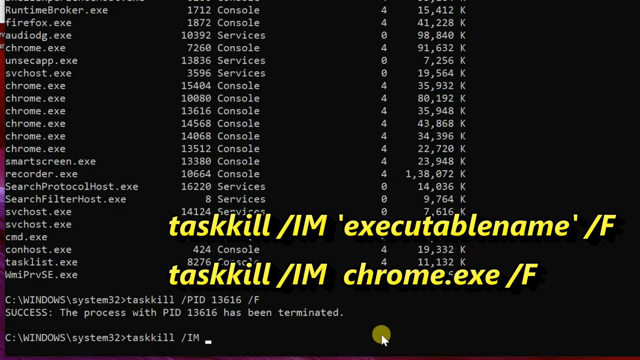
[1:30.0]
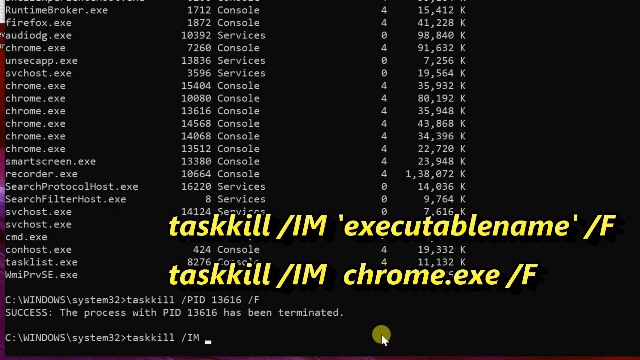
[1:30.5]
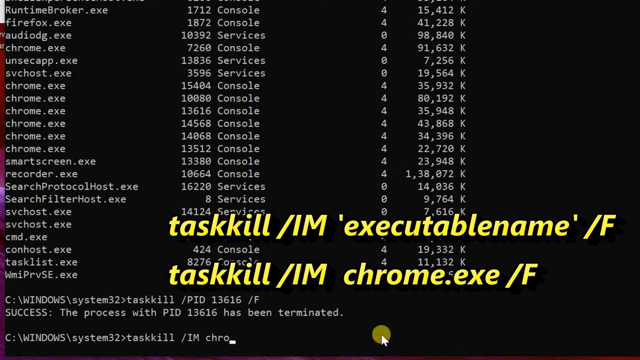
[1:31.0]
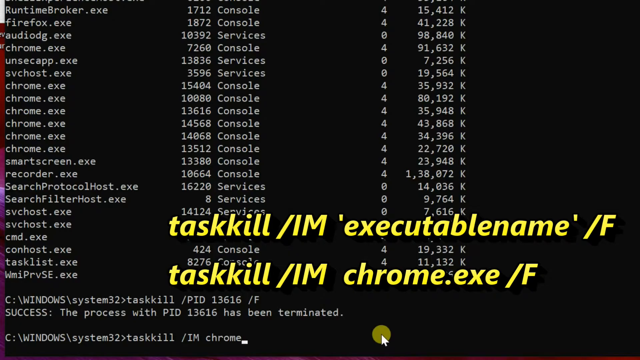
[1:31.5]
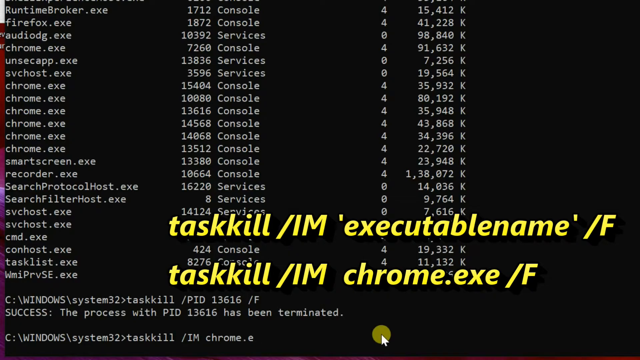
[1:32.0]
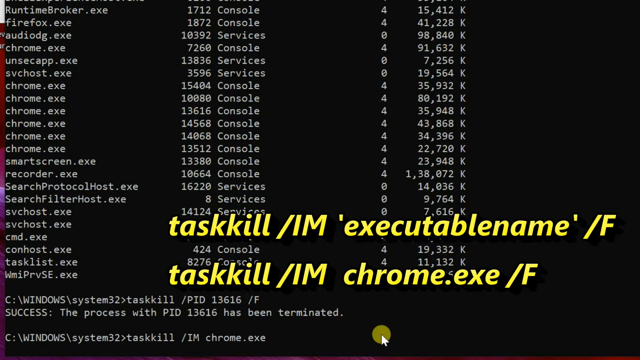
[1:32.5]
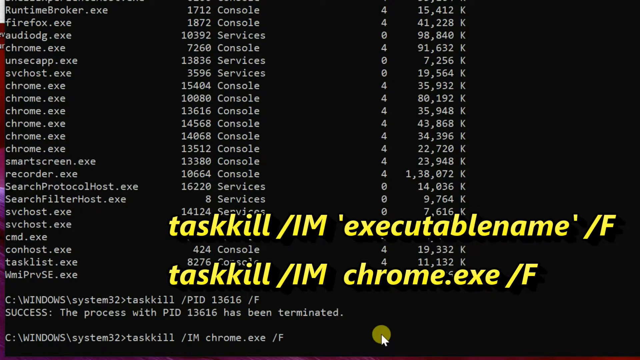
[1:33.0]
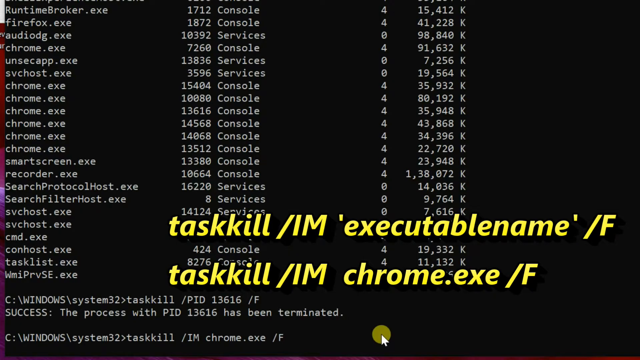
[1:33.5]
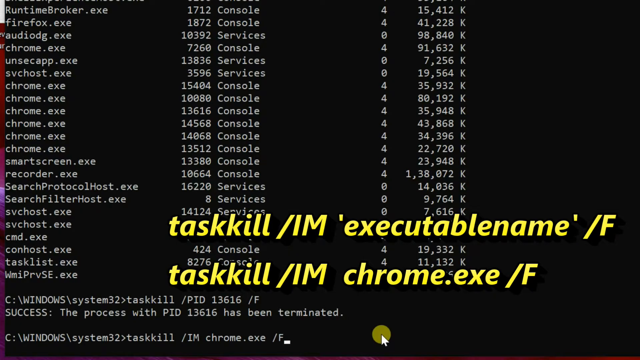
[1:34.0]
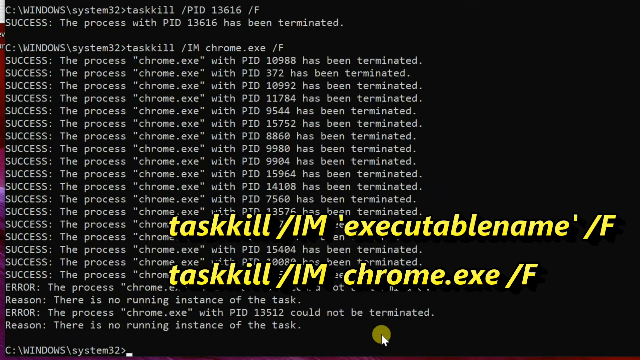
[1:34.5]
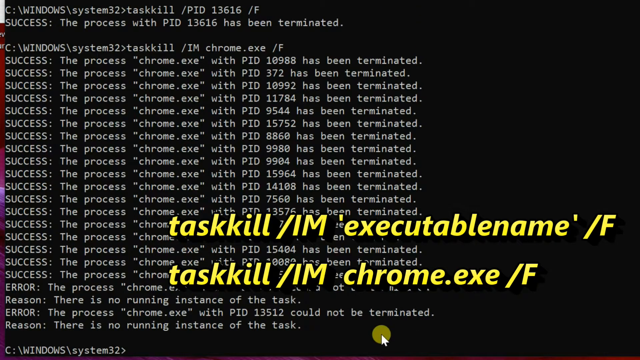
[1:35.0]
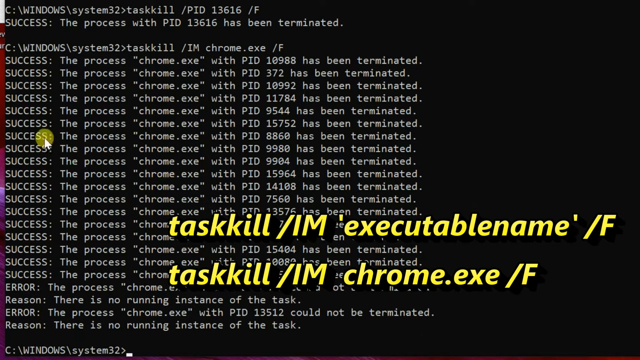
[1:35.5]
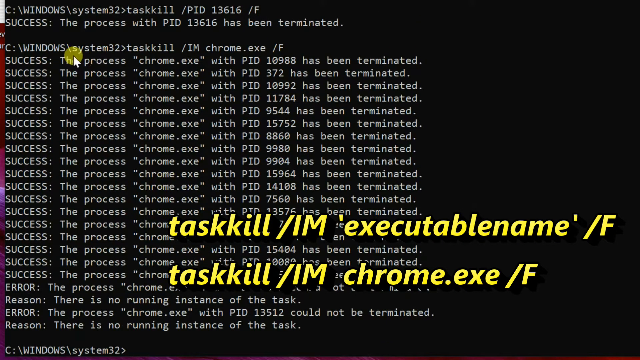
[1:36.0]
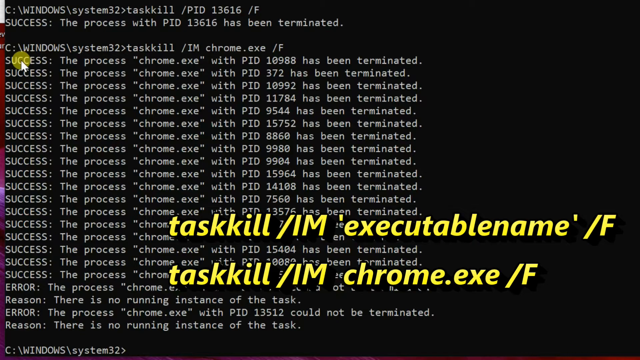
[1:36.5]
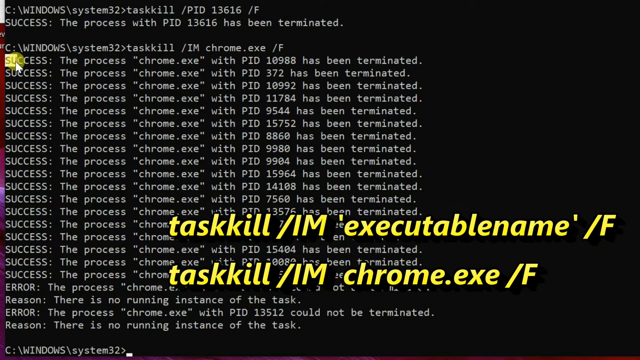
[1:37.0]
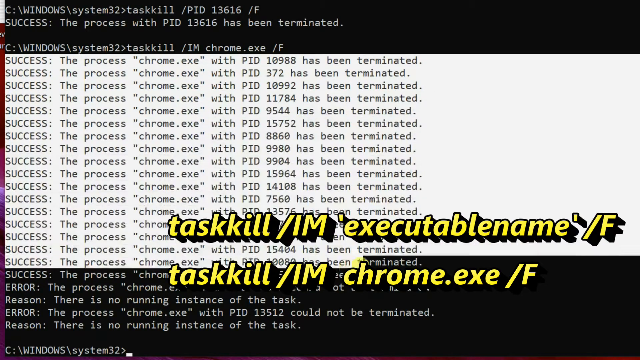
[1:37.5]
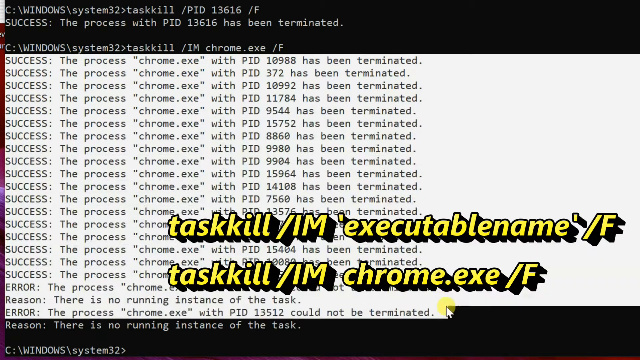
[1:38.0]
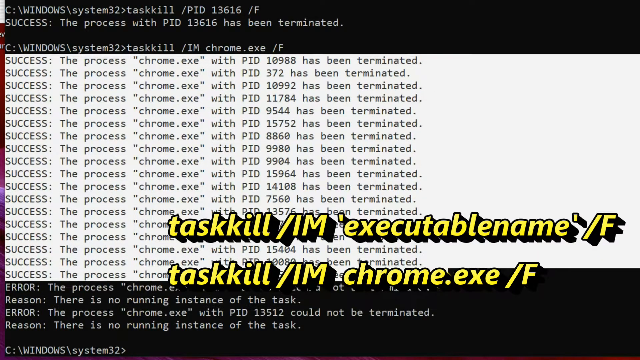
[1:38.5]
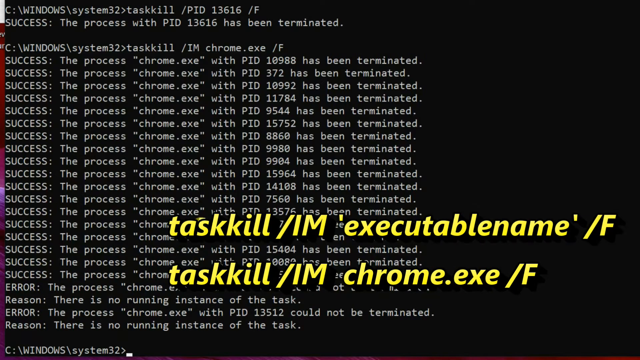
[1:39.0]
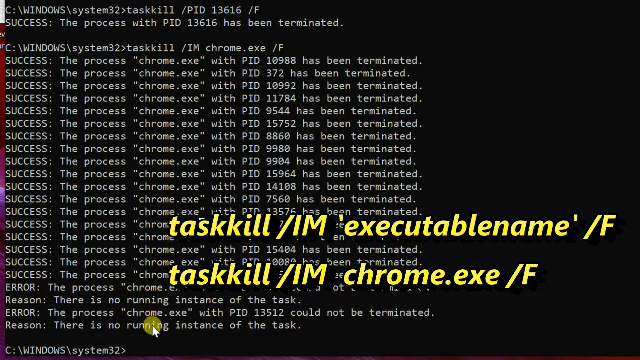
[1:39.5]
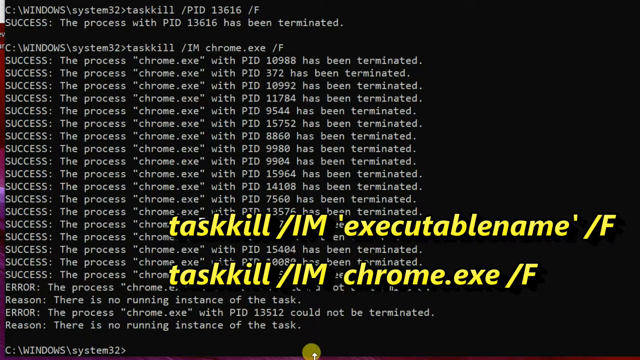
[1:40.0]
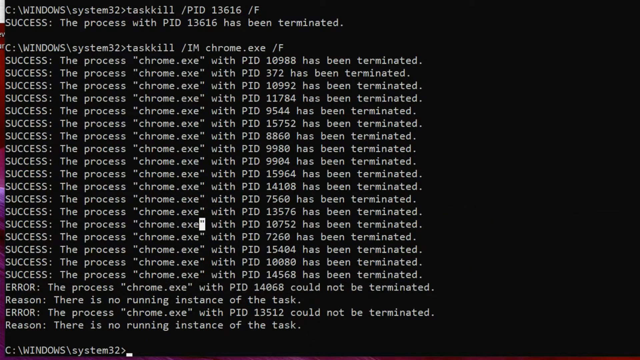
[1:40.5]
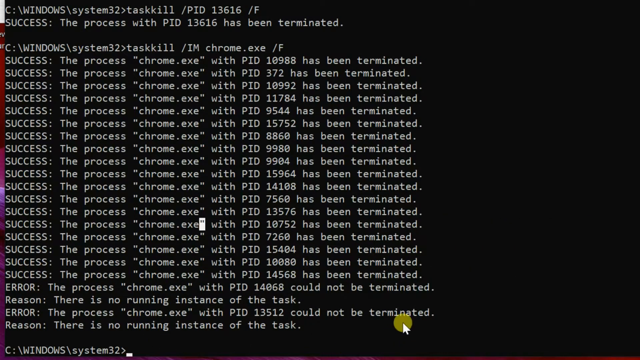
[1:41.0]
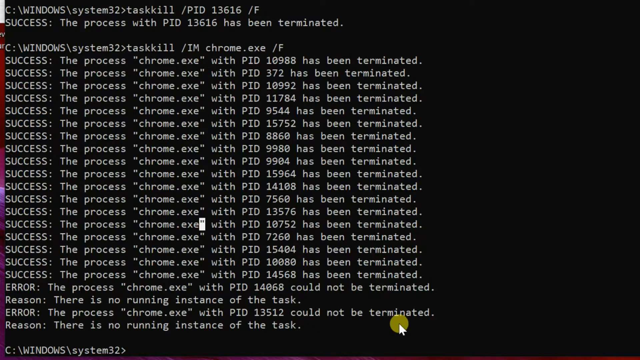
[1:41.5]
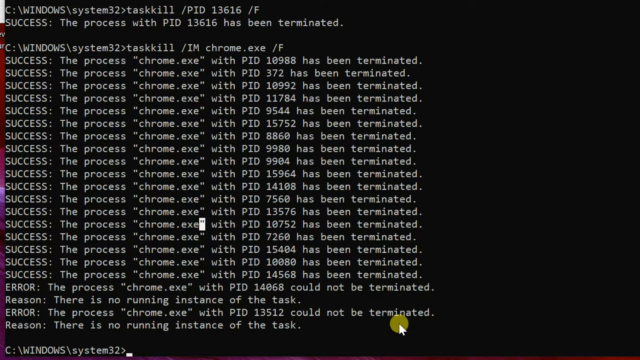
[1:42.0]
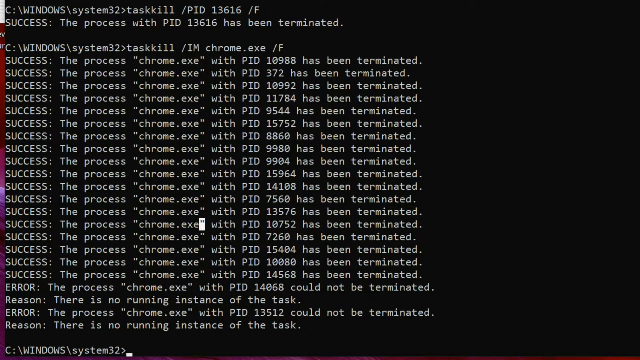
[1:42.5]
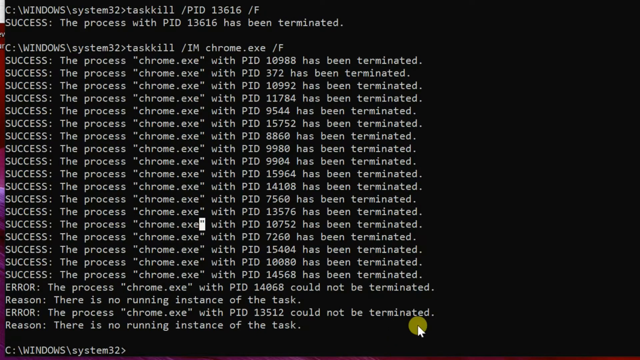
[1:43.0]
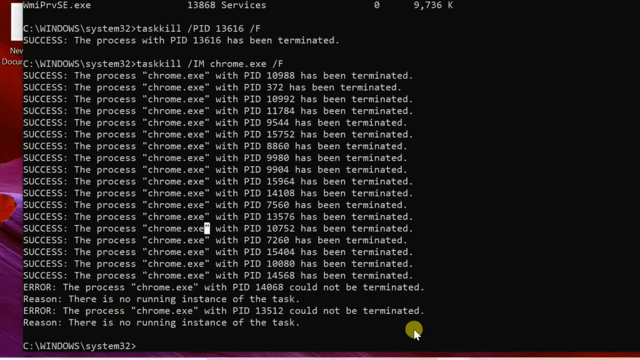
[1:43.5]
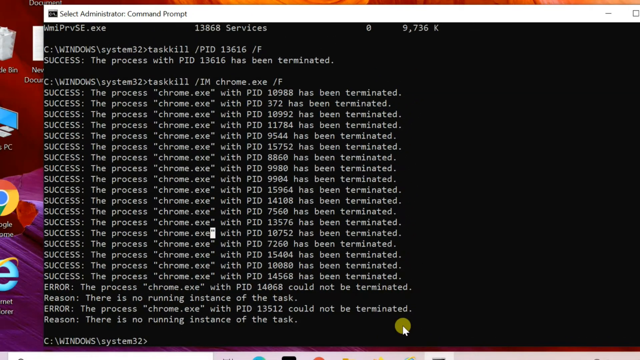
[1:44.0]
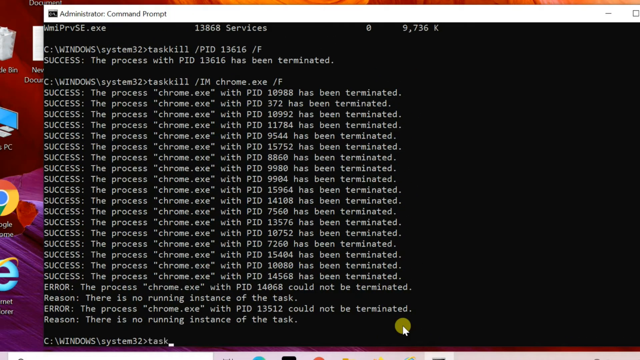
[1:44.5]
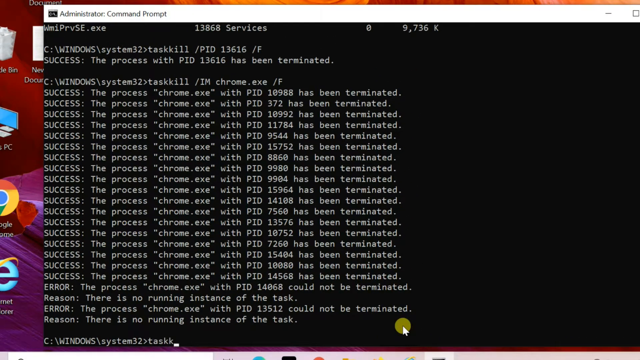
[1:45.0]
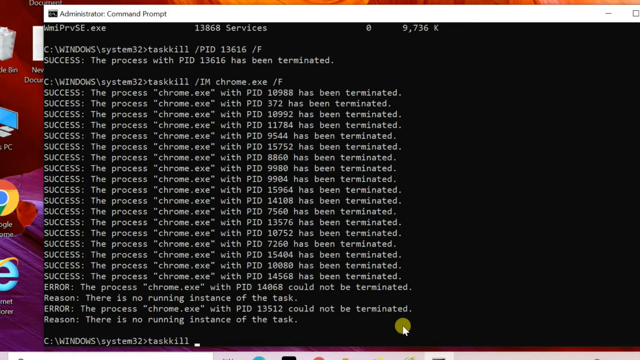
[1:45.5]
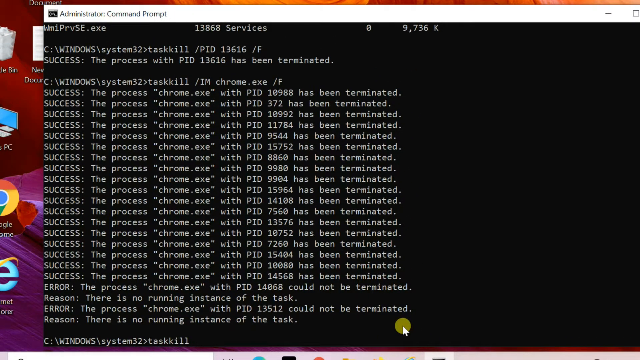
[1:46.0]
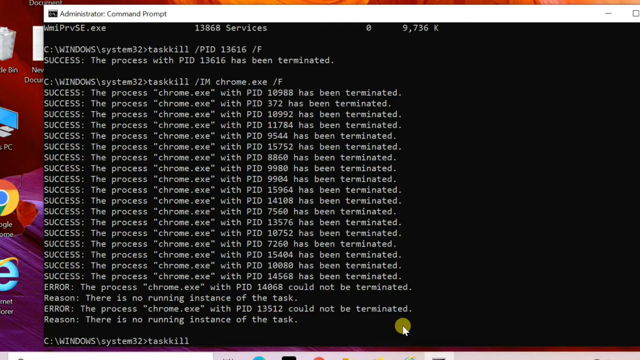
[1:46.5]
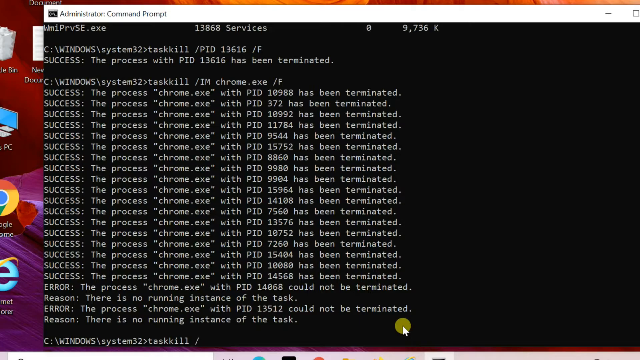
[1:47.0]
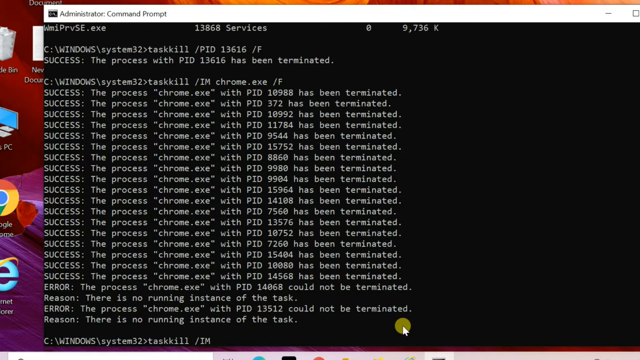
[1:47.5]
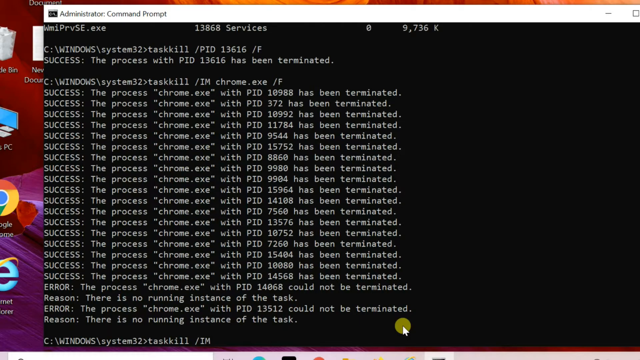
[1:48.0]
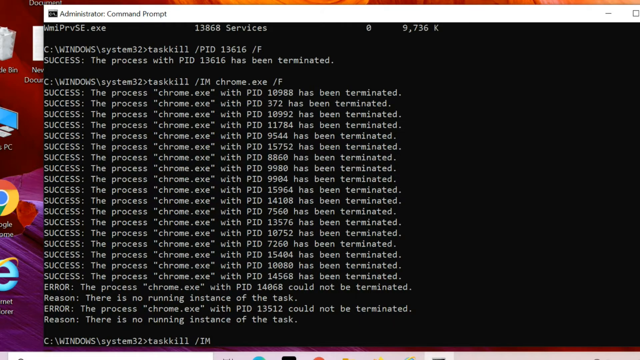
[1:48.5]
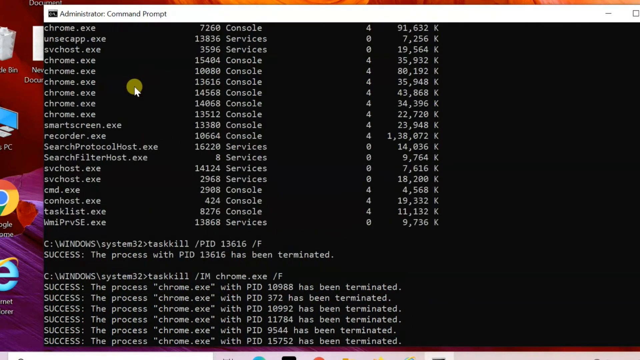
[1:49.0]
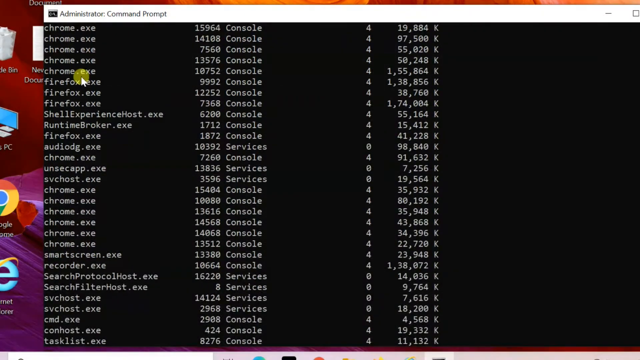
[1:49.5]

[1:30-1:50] An alternate way of killing a process, using the image name instead of the PID, is shown. In the task list, the image name for process ID 13616 is chrome.exe. The command taskkill /im chrome.exe /f is entered. The output is a whole column of success messages, each saying the process chrome.exe has been terminated, each with a different PID; there are more than a dozen processes associated with chrome.exe.